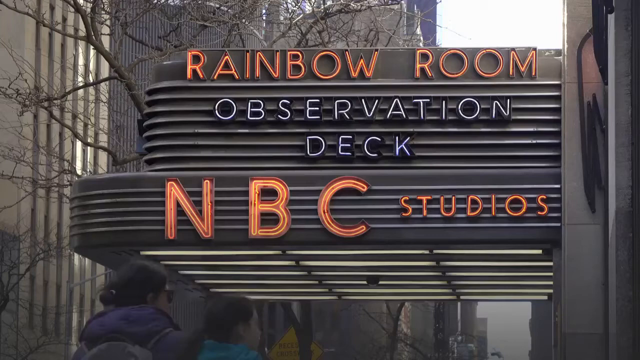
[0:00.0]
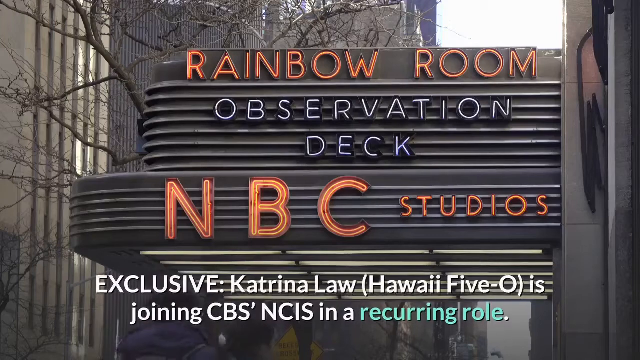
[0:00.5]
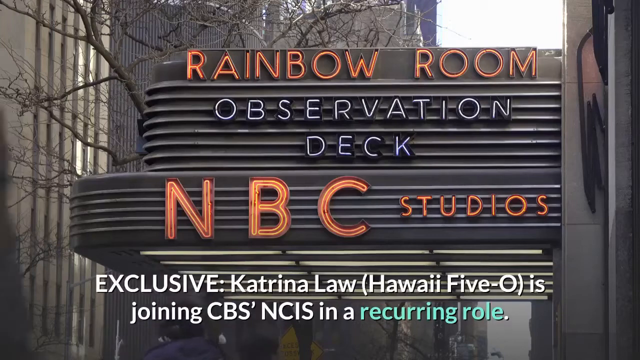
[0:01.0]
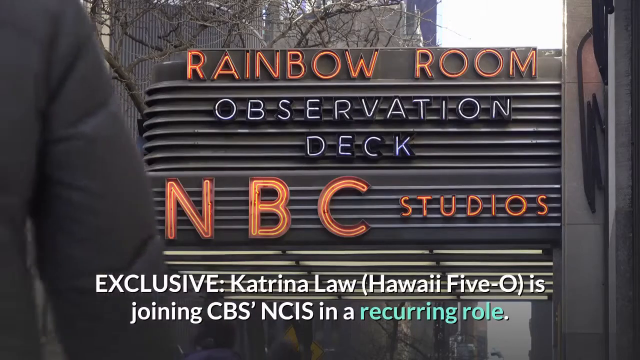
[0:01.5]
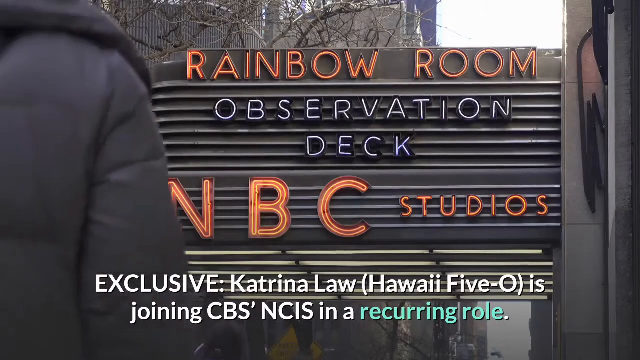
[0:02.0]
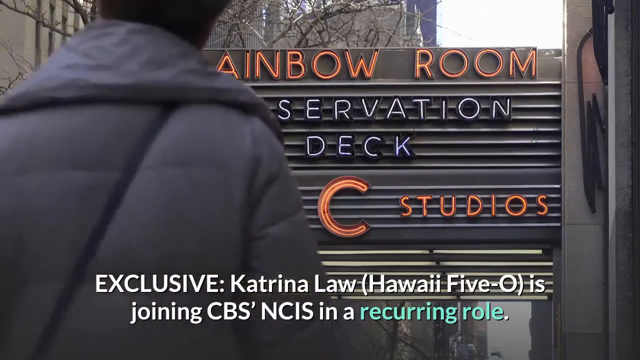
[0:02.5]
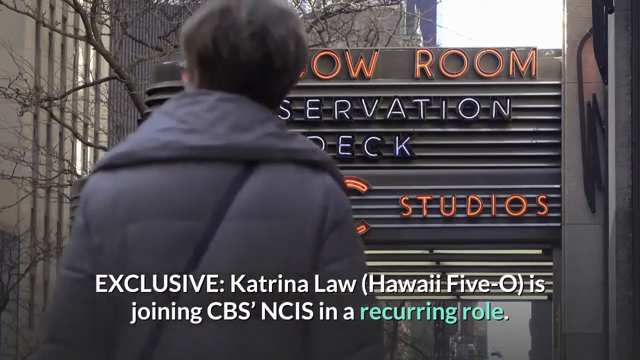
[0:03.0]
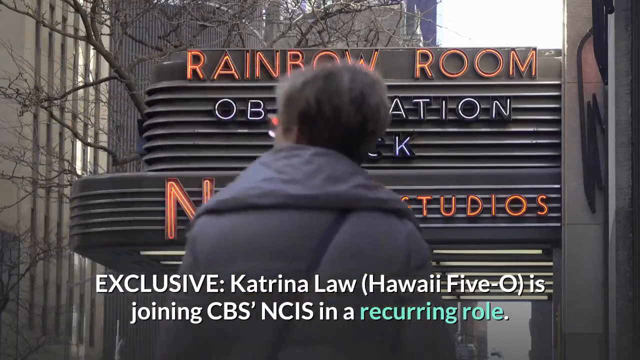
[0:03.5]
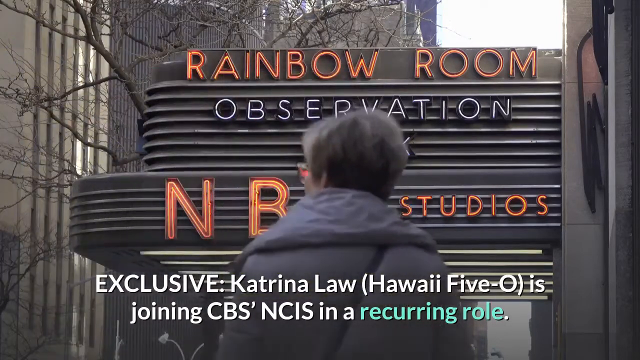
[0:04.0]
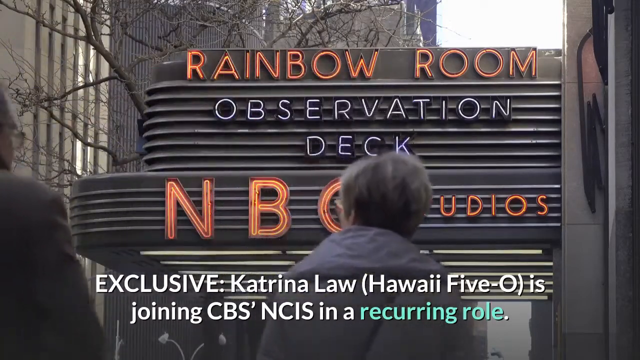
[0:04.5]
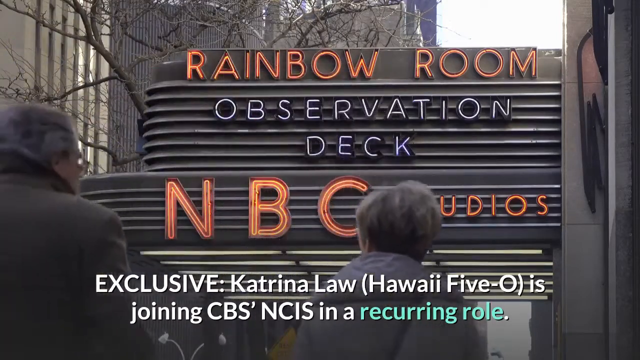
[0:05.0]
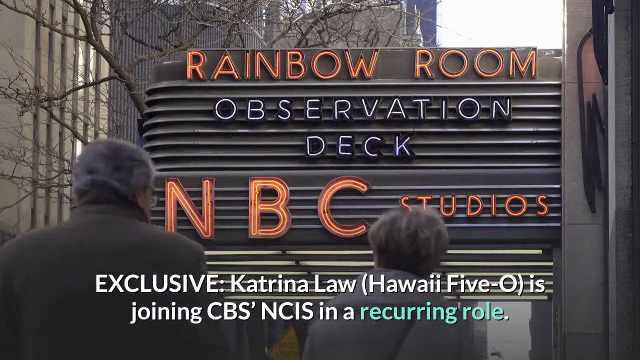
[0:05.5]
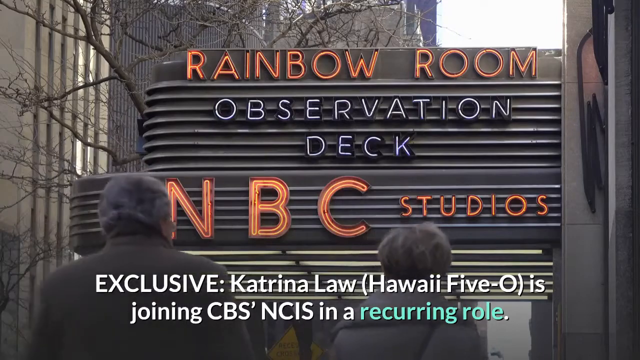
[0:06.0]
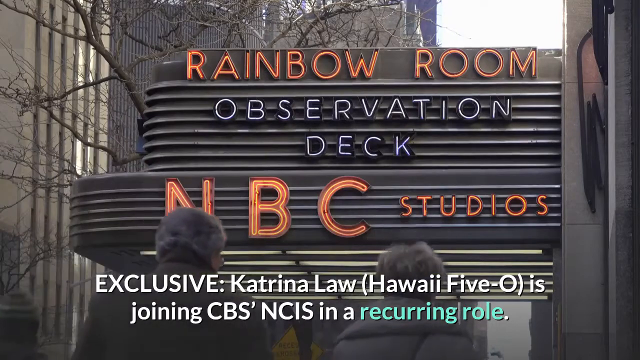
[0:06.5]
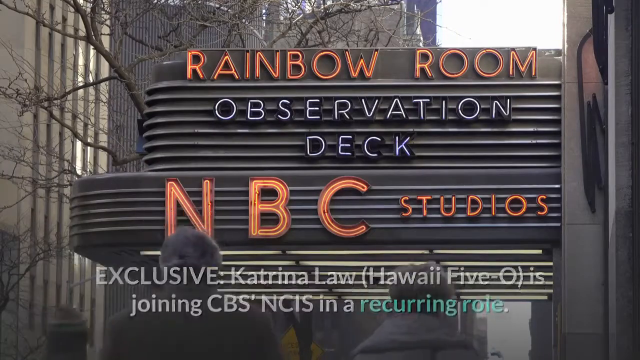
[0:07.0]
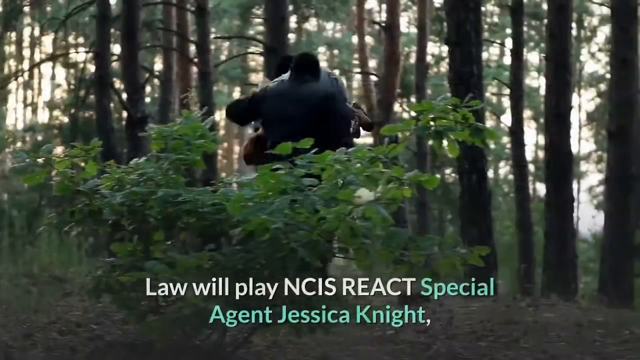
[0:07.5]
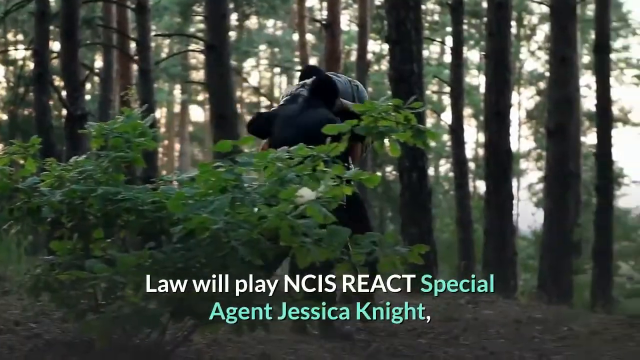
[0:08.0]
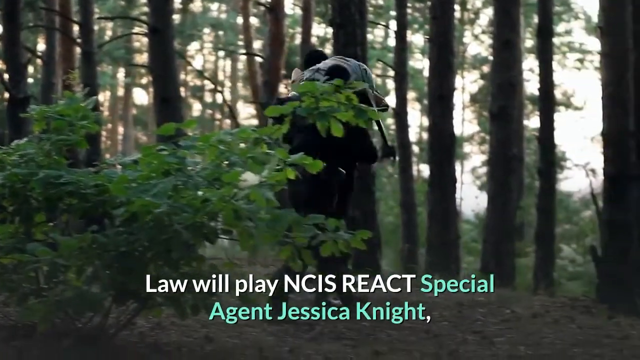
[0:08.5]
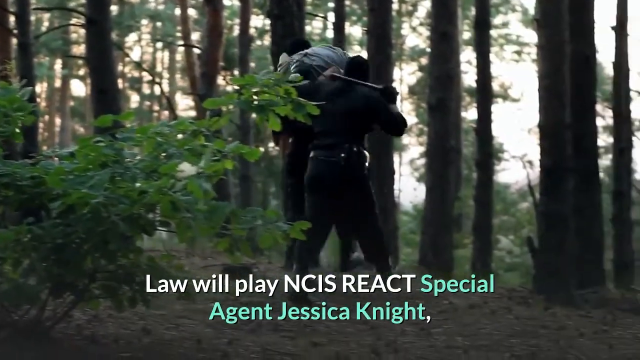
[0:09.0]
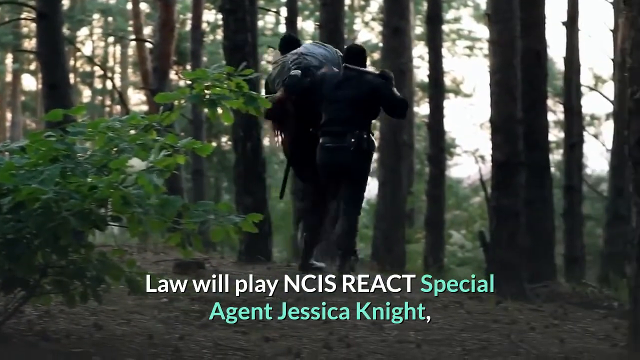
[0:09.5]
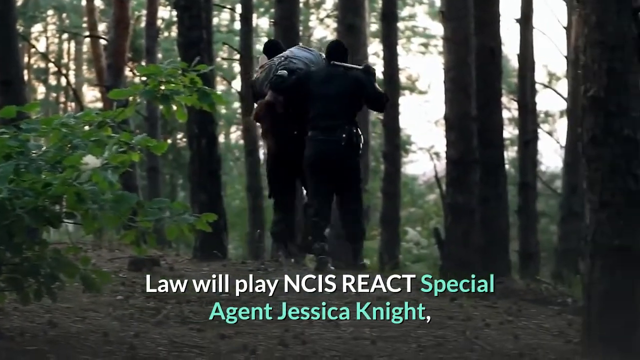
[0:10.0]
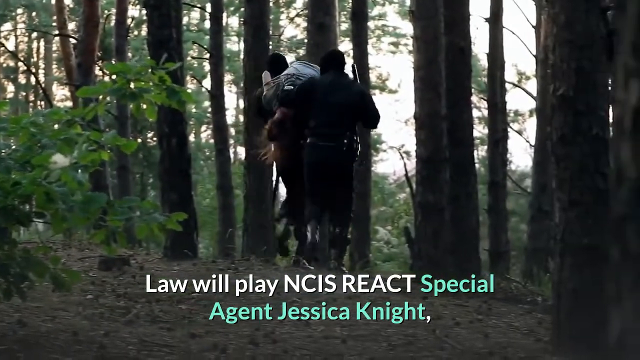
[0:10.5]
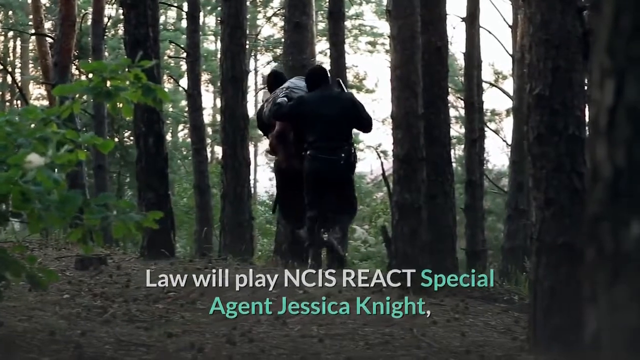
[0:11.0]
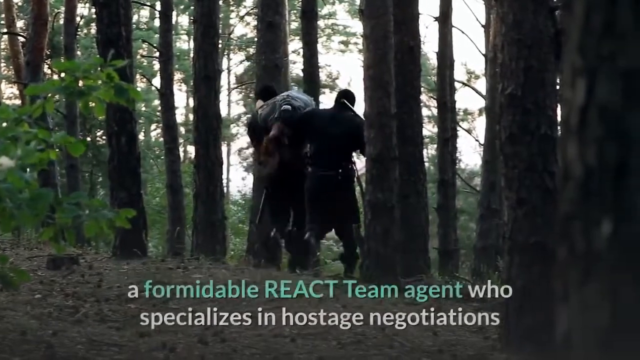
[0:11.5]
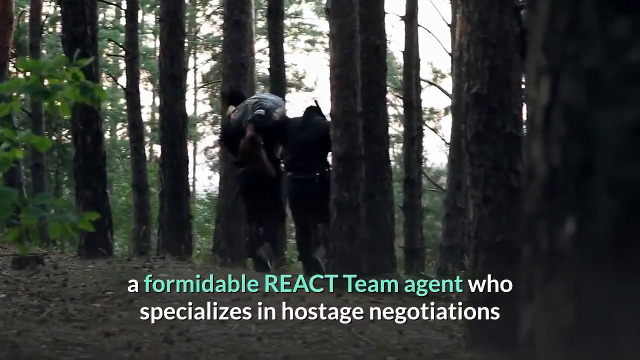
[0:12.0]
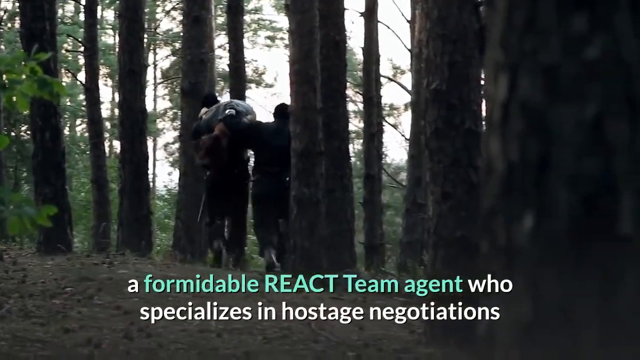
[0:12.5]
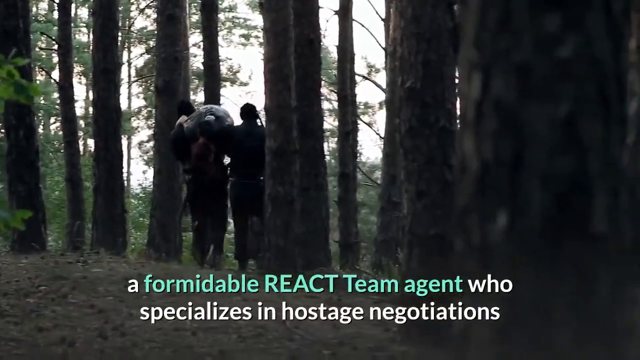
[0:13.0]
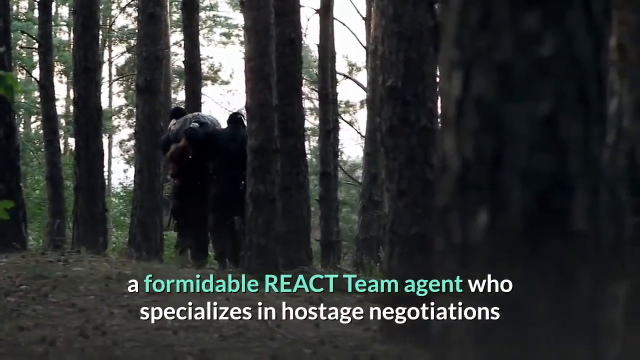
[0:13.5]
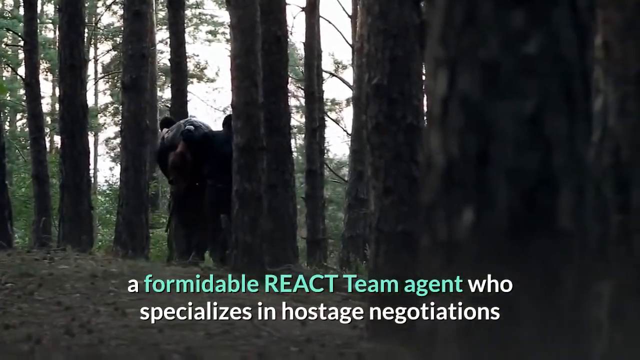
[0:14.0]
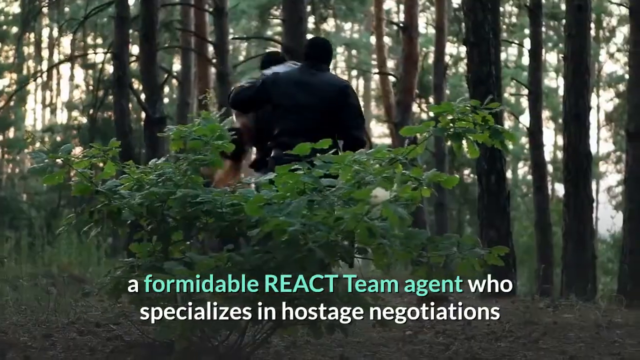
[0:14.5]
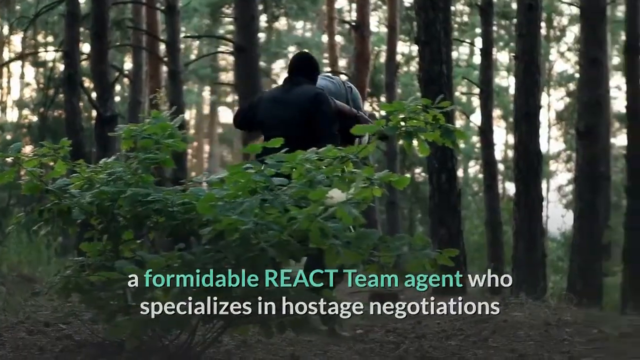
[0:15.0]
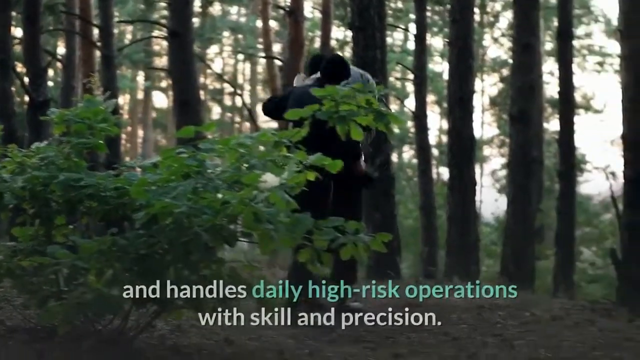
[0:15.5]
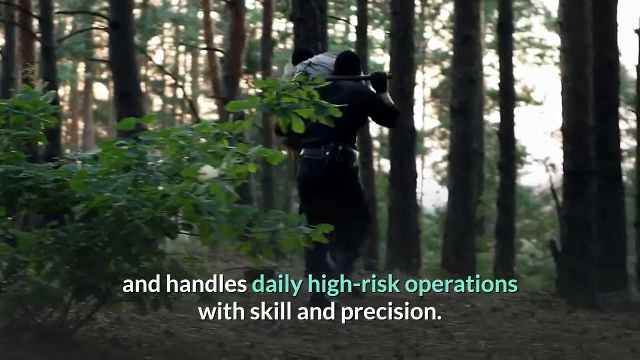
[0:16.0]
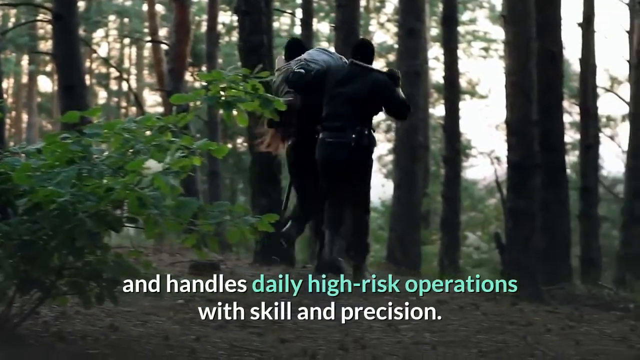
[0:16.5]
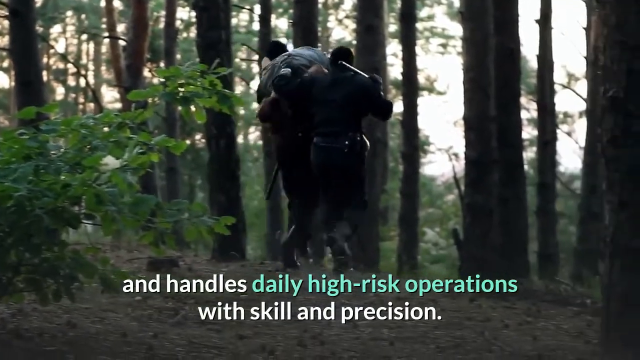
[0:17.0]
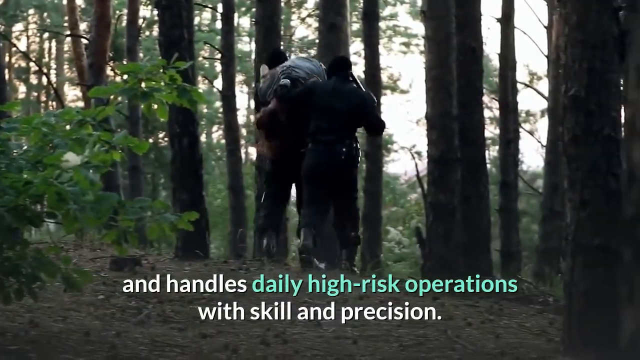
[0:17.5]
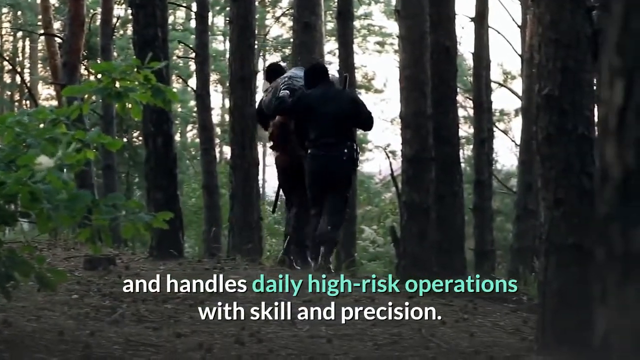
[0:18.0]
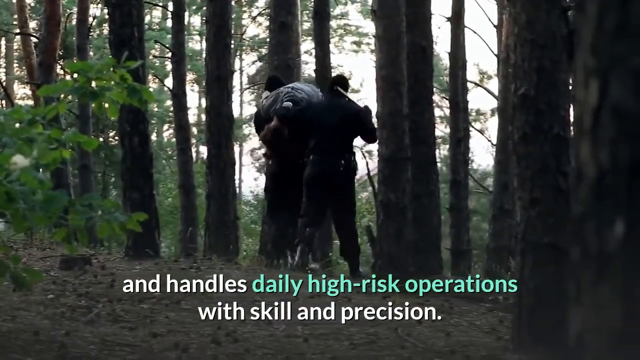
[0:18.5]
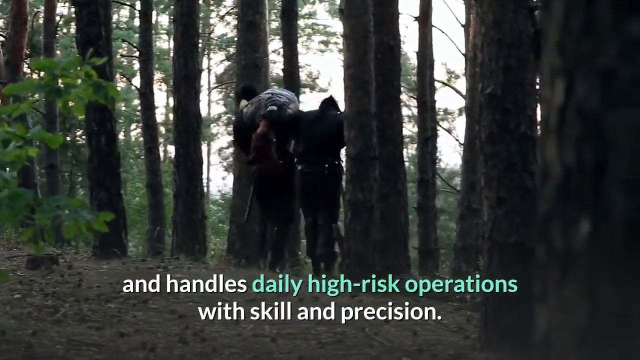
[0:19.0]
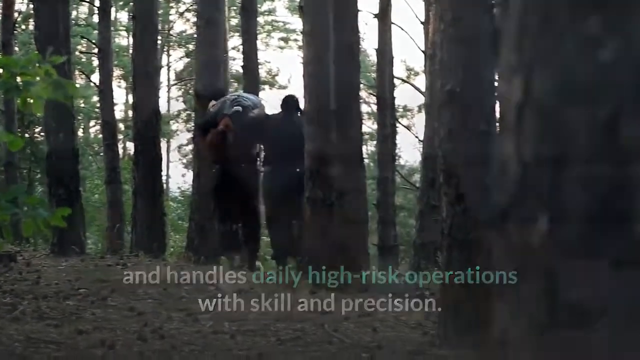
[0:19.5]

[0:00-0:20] The video opens on the outside of the NBC Studios Rainbow Room, where on-screen text reads "observation deck." Further text marks the news as exclusive and reads "Katrina Law, Hawaii Five-O, is joining CBS NCIS in a recurring role." People walk down the streets of New York outside NBC Studios. Next comes a scene from a movie in which police carry a person away through the middle of the woods. One officer has the body over his shoulder while the other walks along beside him. The wooded area is dark and dimly lit. Text at the bottom of the screen reads "Law will play NCIS REACT Special Agent Jessica Knight, a formidable REACT team agent who specializes in hostage negotiations and handles daily high-risk operations with skill and precision." A stock scene of a family in a house follows: a mother with her two daughters lying on the living room floor. It flashes on screen quickly and then goes away.